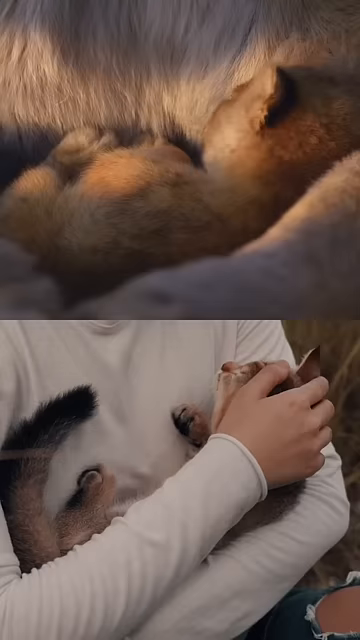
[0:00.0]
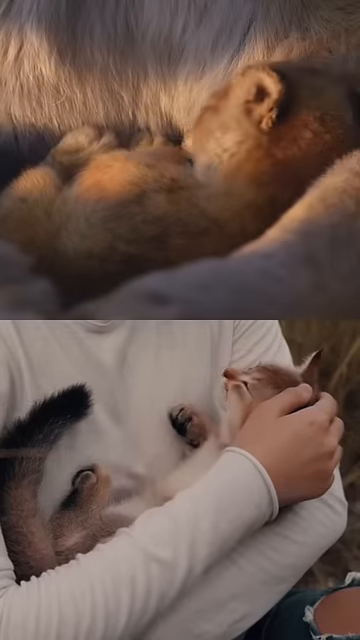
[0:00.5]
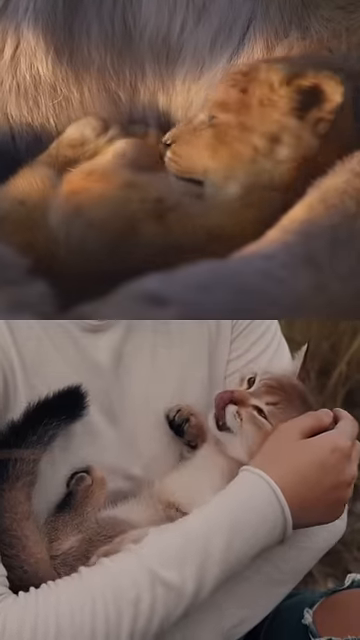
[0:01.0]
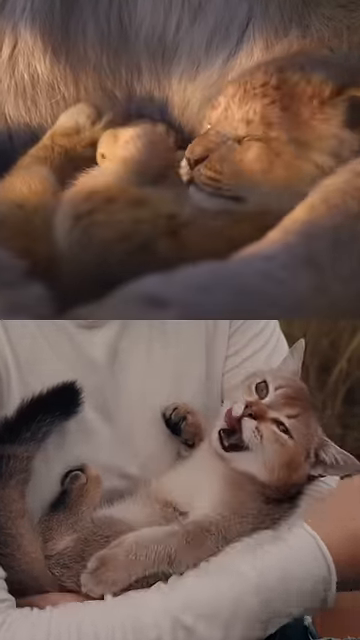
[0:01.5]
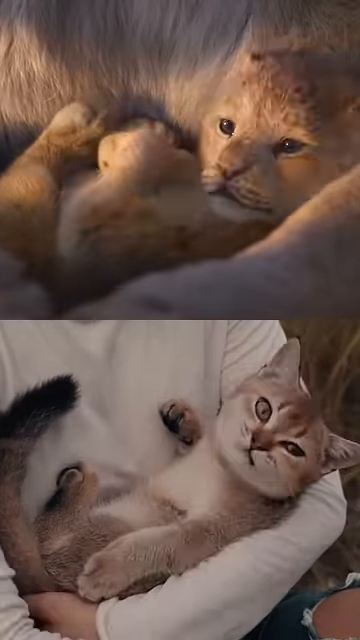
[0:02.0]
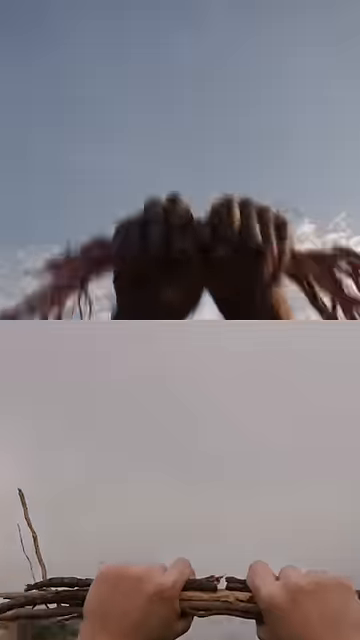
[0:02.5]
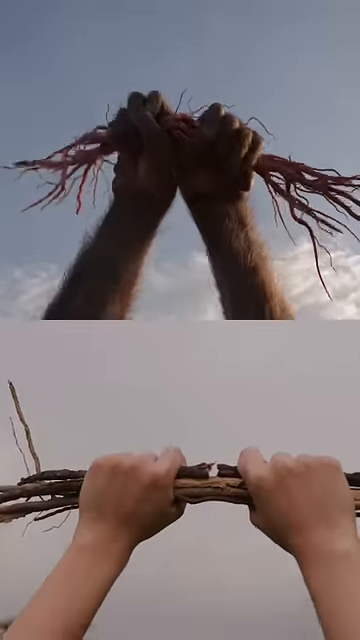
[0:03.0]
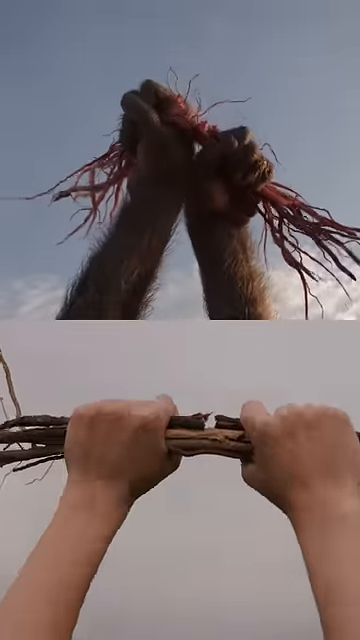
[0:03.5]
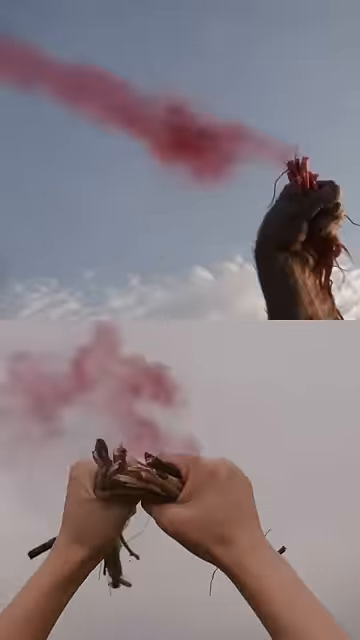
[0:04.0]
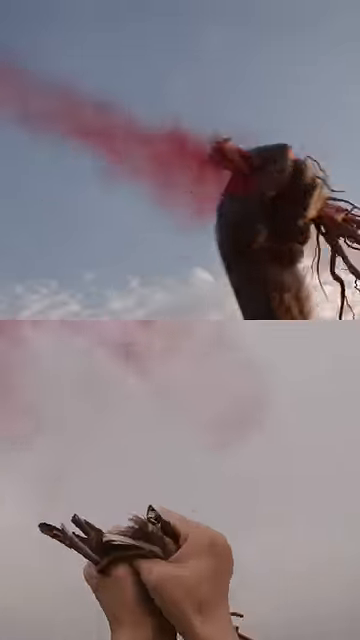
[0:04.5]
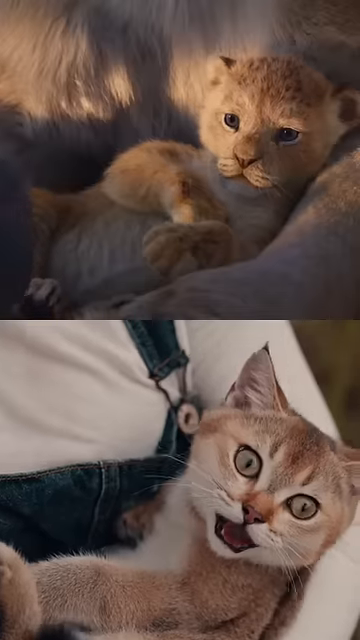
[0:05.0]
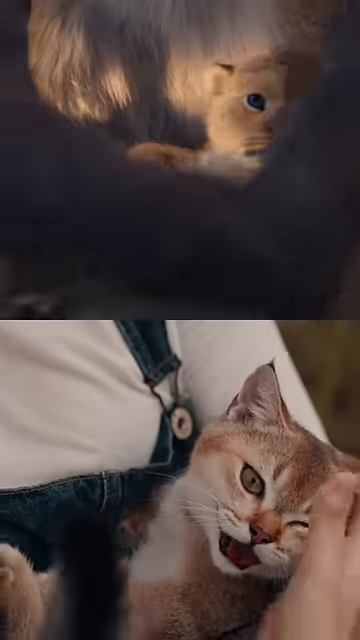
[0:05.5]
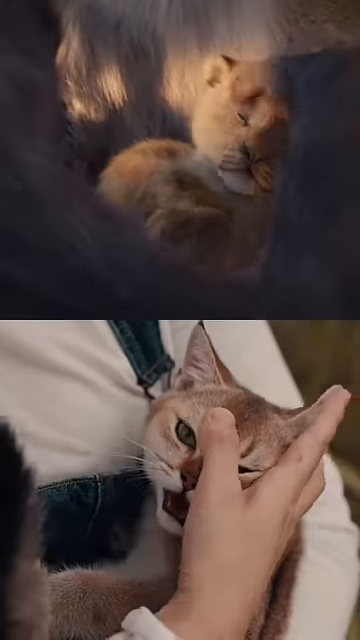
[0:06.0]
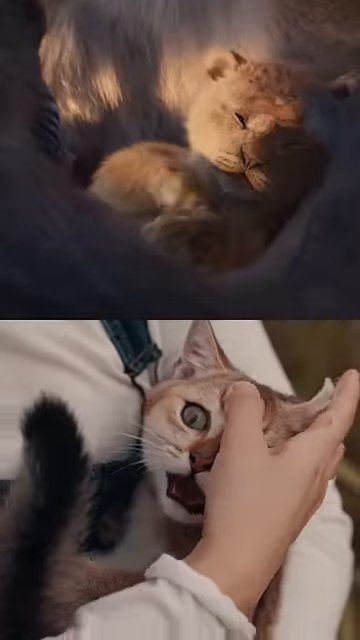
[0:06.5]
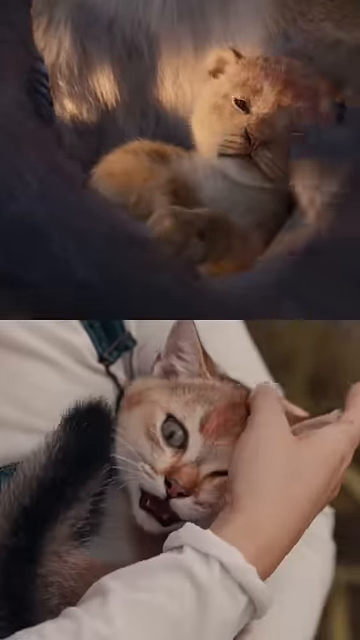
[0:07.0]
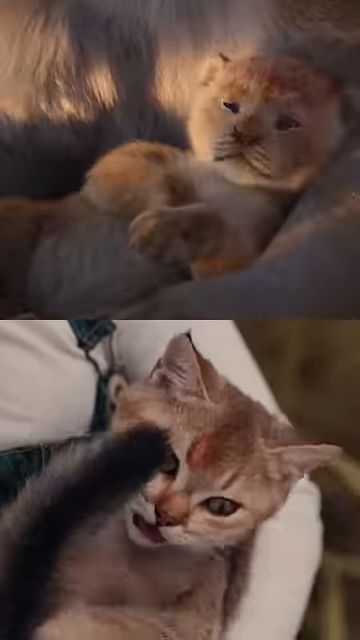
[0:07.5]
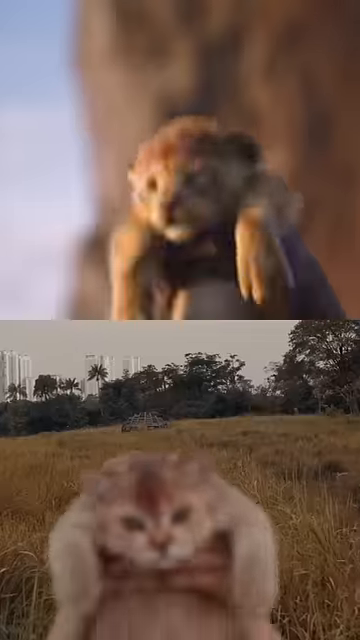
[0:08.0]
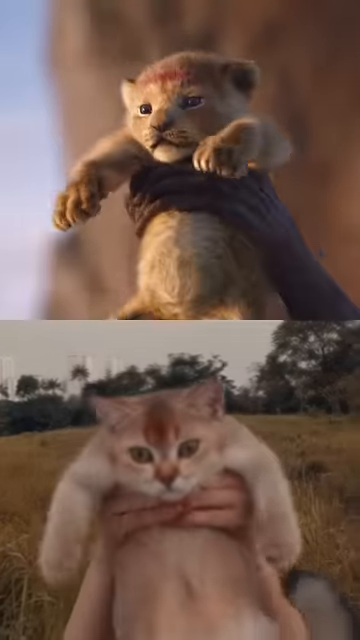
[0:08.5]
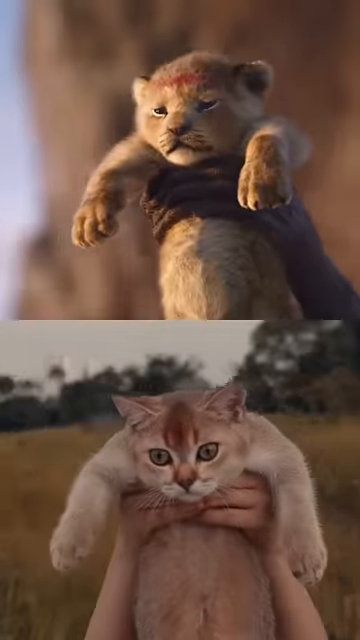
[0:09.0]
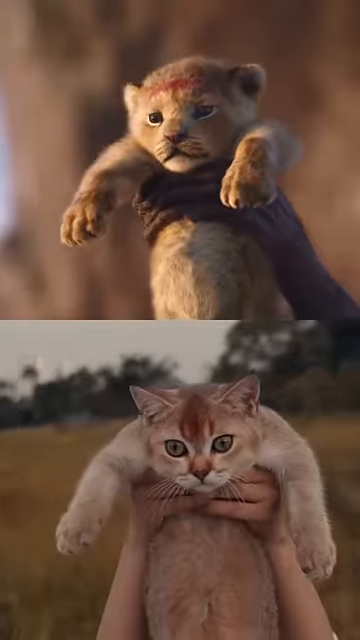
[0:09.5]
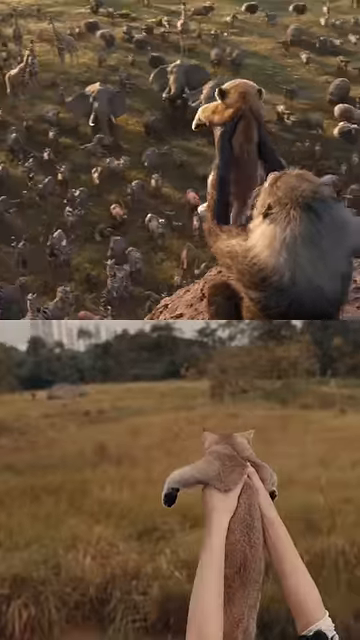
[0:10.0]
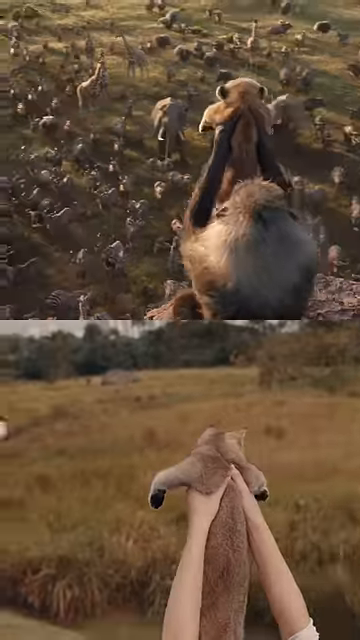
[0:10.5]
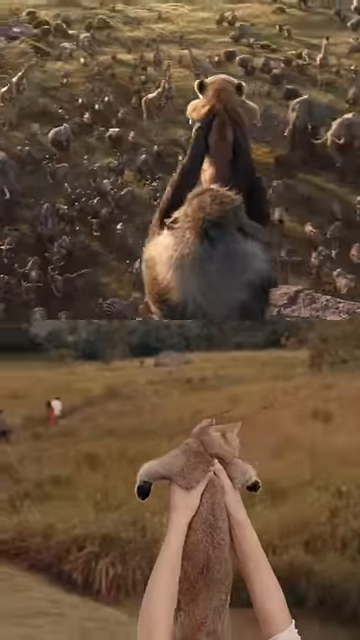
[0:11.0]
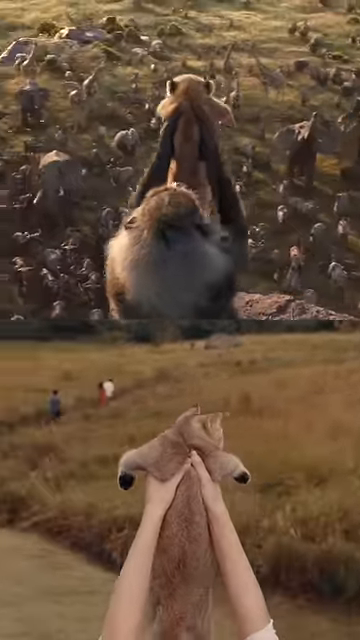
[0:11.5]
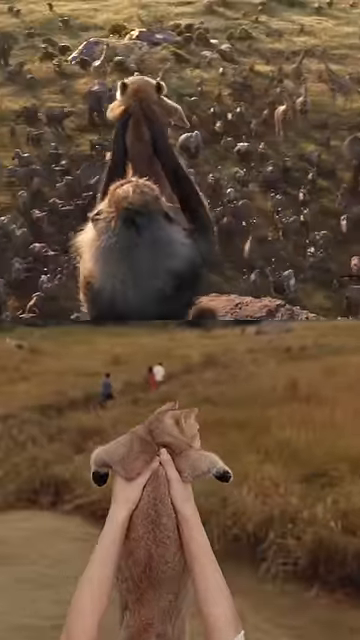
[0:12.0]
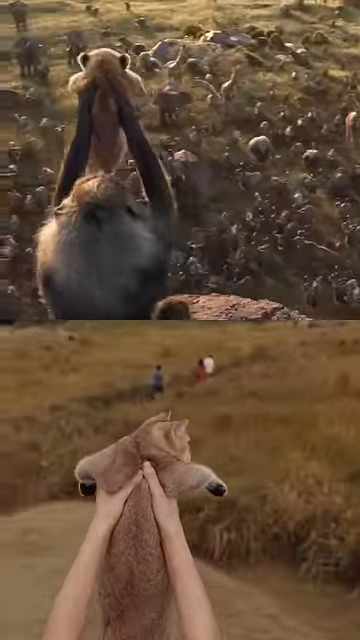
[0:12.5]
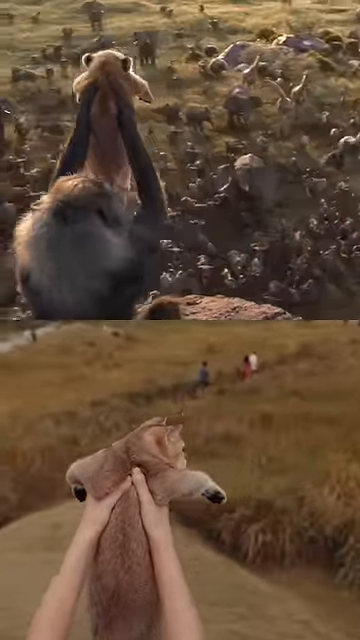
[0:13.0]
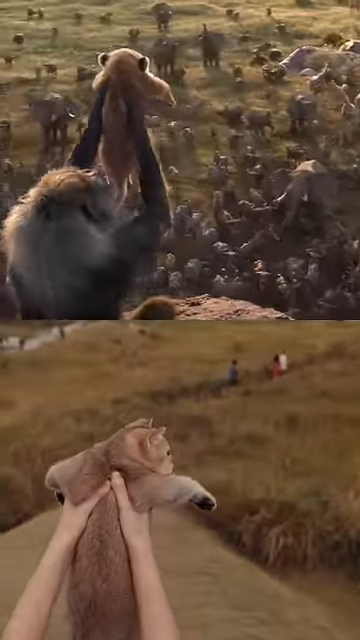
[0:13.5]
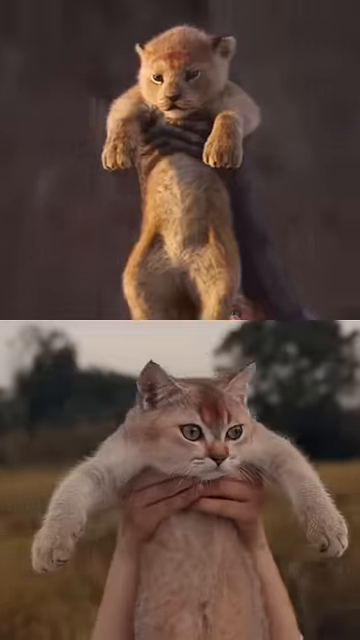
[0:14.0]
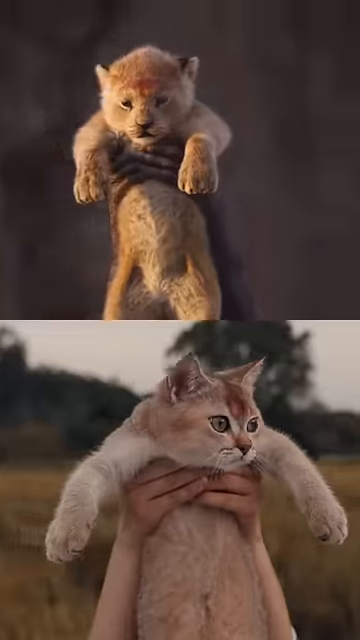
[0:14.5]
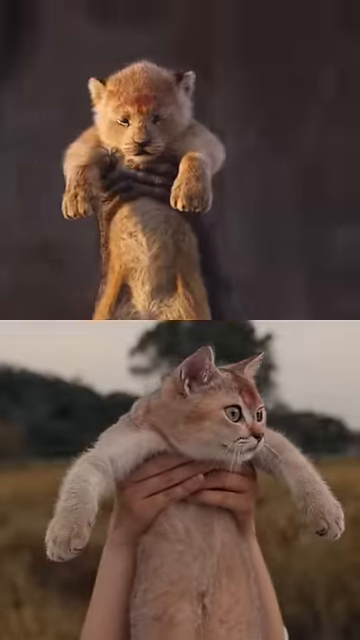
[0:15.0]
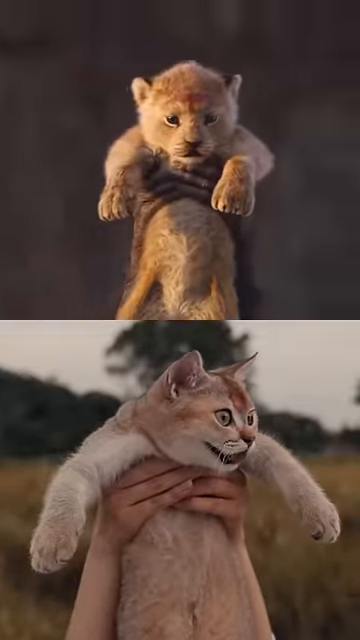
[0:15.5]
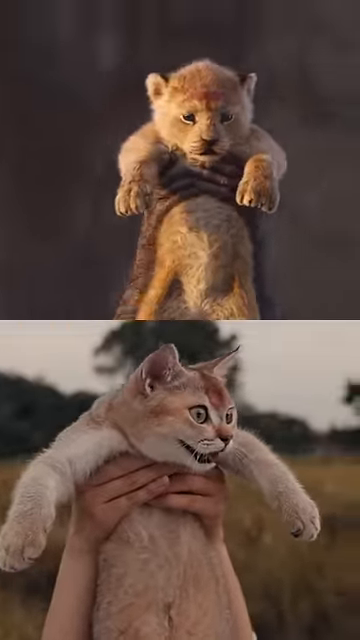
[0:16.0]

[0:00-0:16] Someone recreates the beginning of the live-action version of The Lion King, in which the monkey, Rafiki, picks up the soon-to-be king of the jungle as a cub and holds him up over the kingdom for everybody to see and applaud. The top half of the frame plays the original live-action movie, starting from where the cub is picked up out of his mom's arms. Below it is a video someone took of their house cat, matching the movie frame for frame. Something is rubbed on the cat's forehead just as in the movie, and just as the cub is held onto by his mom in the movie, somebody is holding onto the cat. The cat is the same golden color as the lion cub. Sticks are broken in the air, and the cat is held out over the kingdom the same way as in the movie.